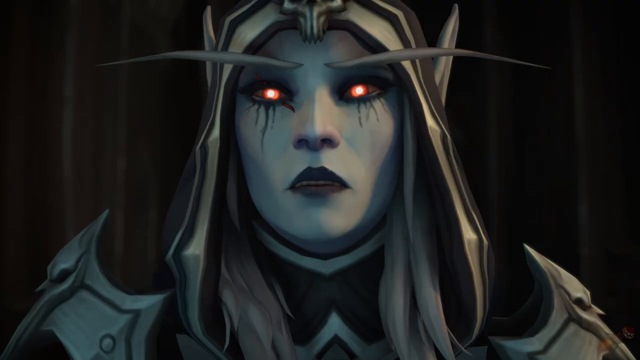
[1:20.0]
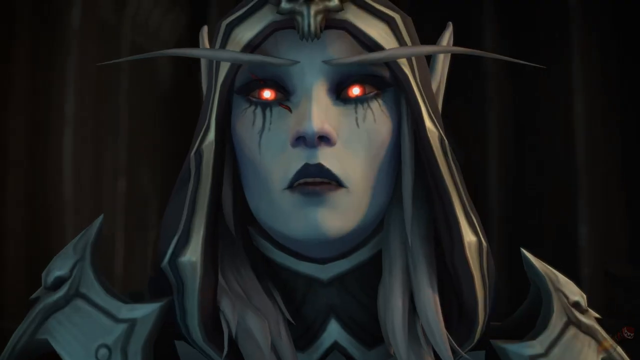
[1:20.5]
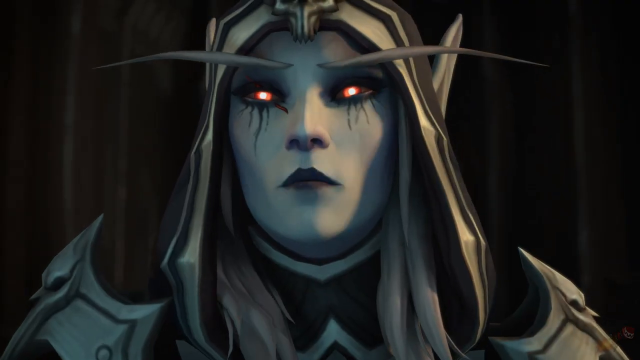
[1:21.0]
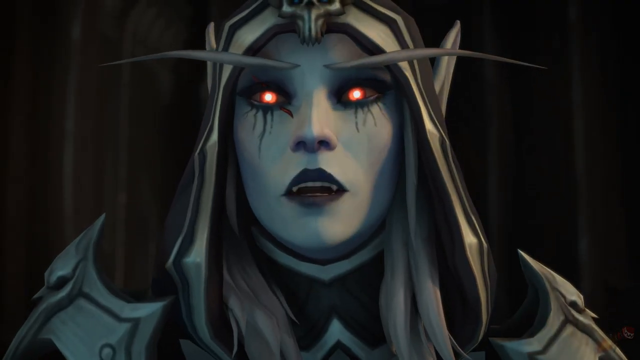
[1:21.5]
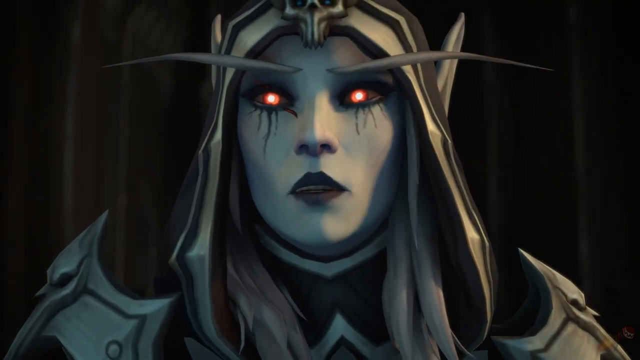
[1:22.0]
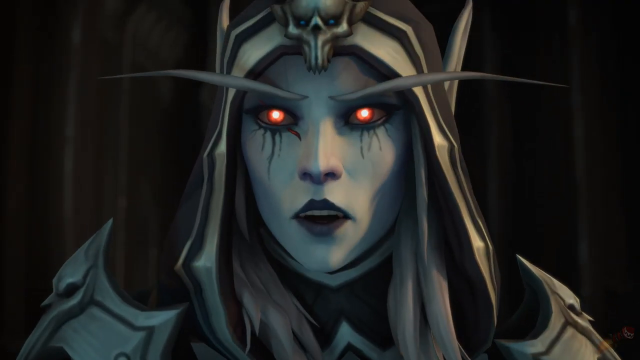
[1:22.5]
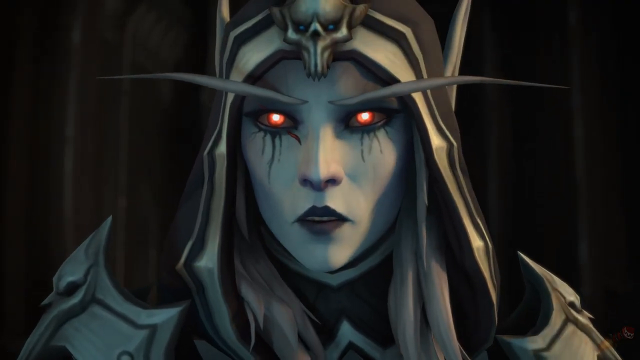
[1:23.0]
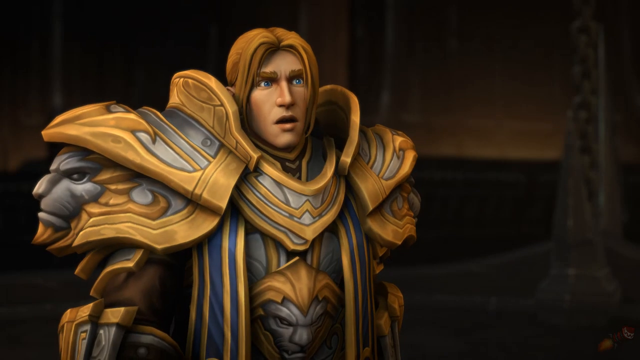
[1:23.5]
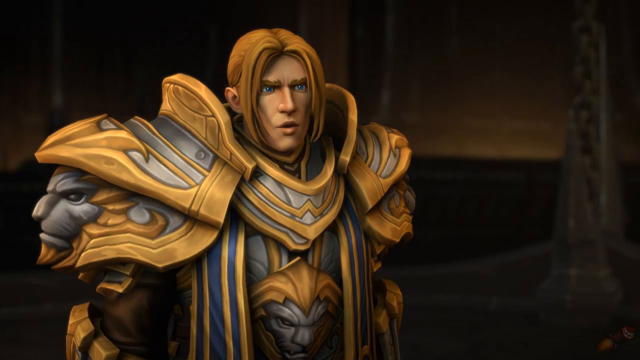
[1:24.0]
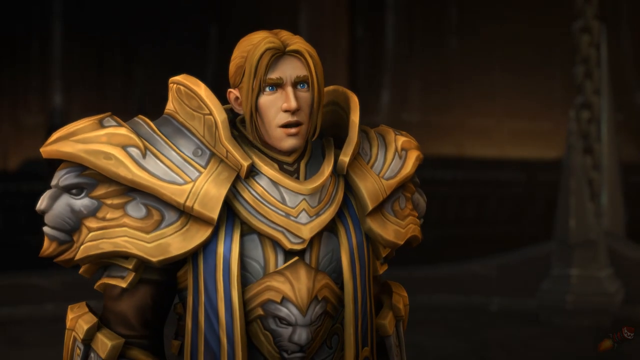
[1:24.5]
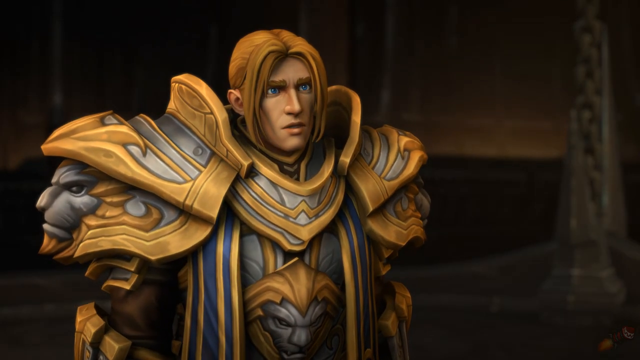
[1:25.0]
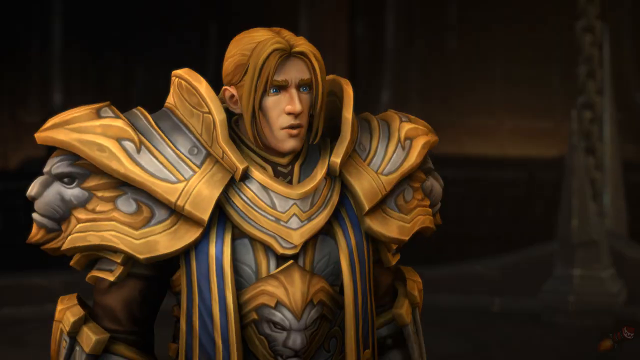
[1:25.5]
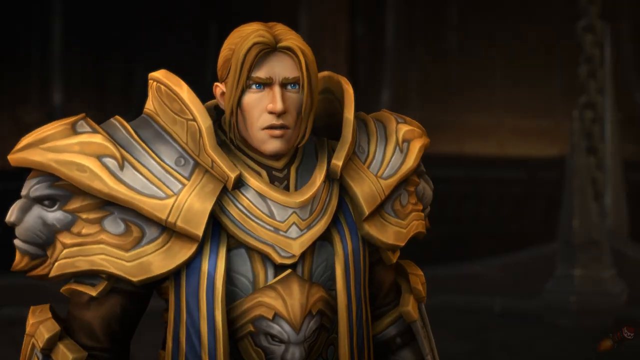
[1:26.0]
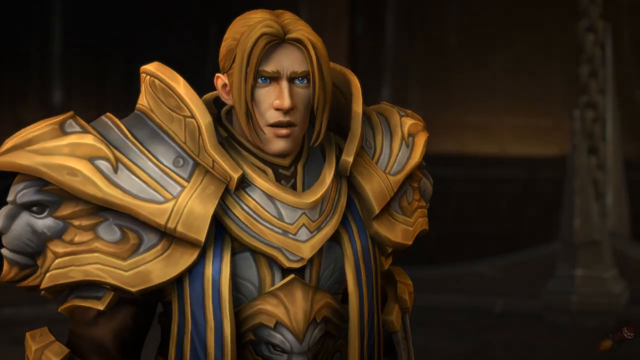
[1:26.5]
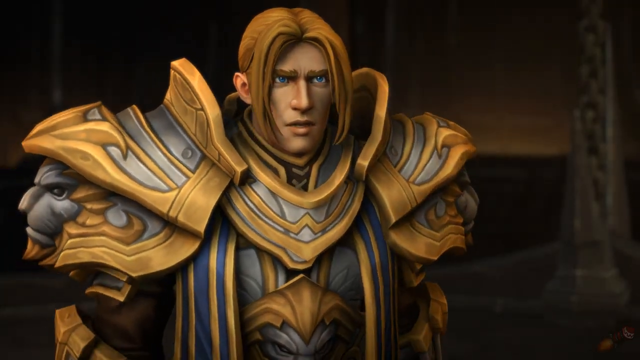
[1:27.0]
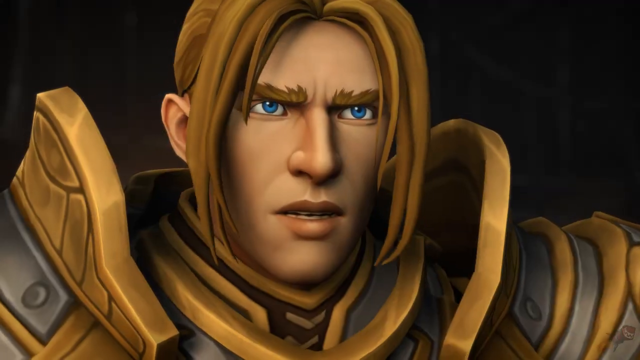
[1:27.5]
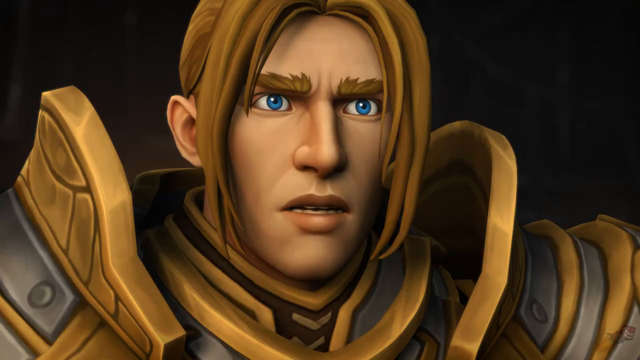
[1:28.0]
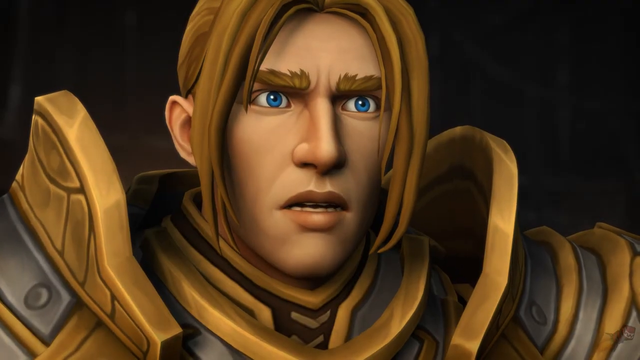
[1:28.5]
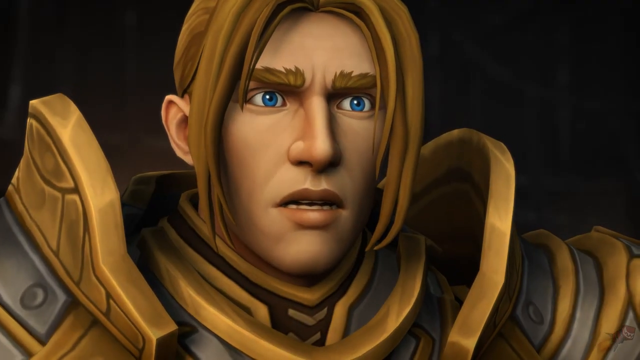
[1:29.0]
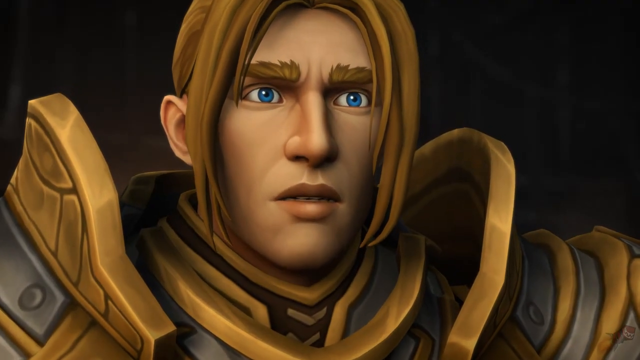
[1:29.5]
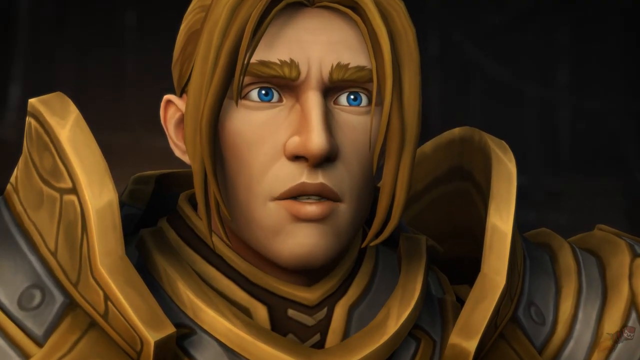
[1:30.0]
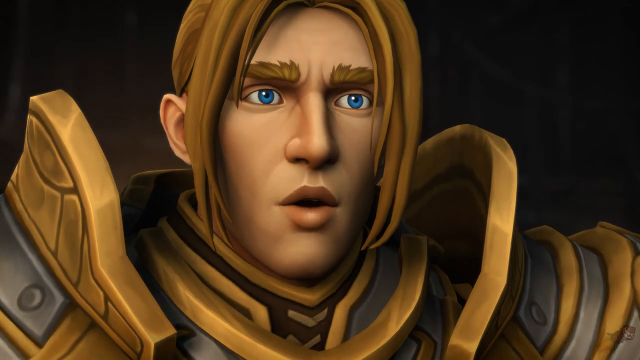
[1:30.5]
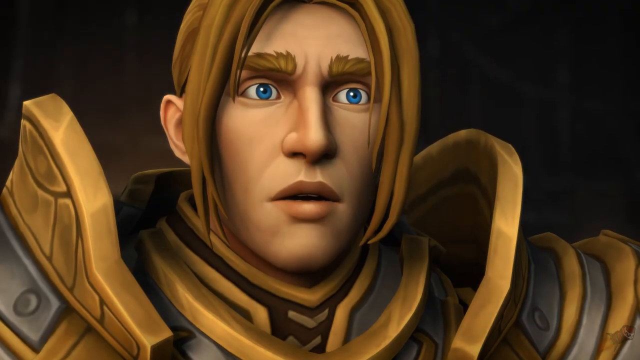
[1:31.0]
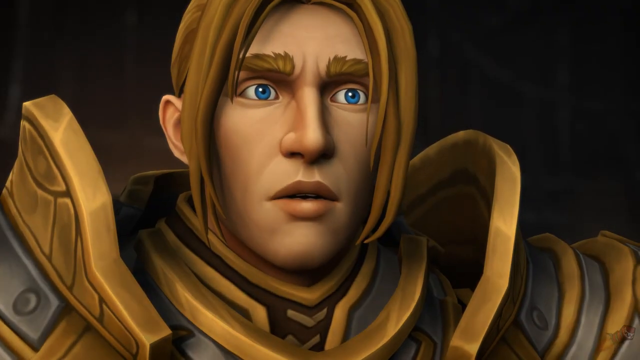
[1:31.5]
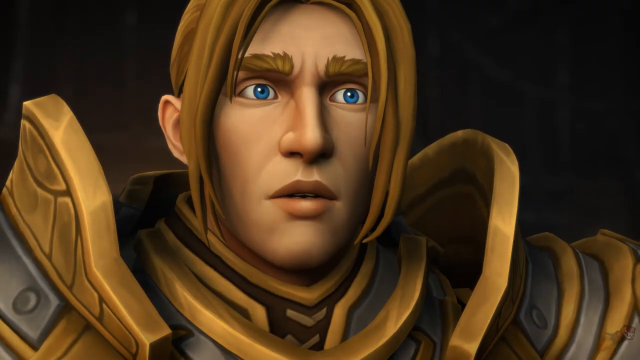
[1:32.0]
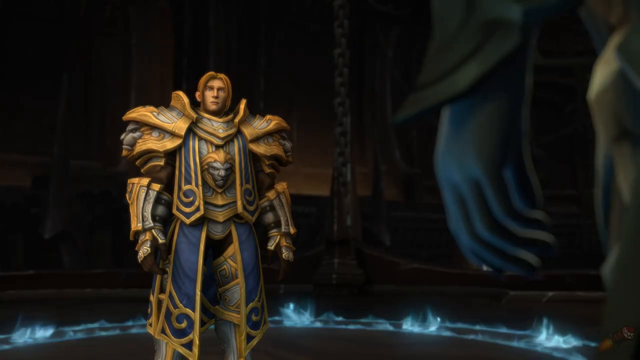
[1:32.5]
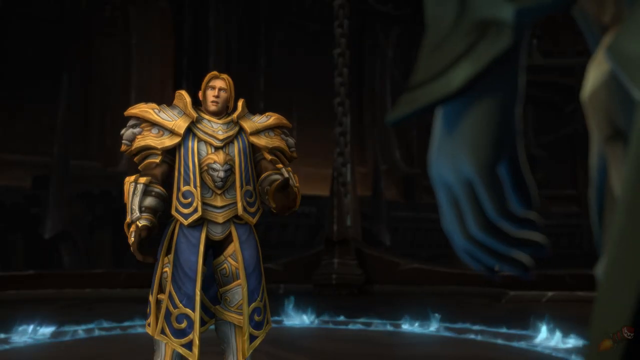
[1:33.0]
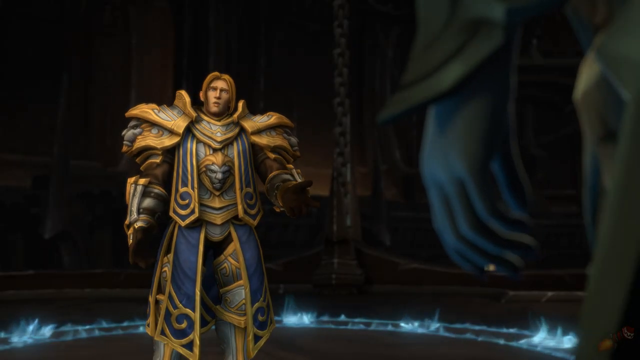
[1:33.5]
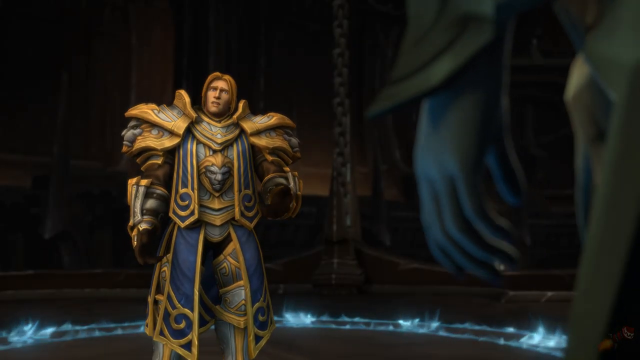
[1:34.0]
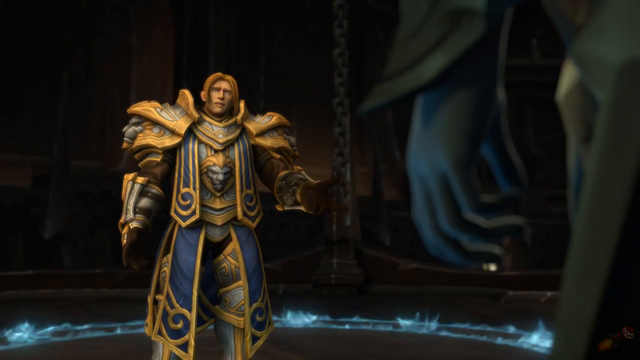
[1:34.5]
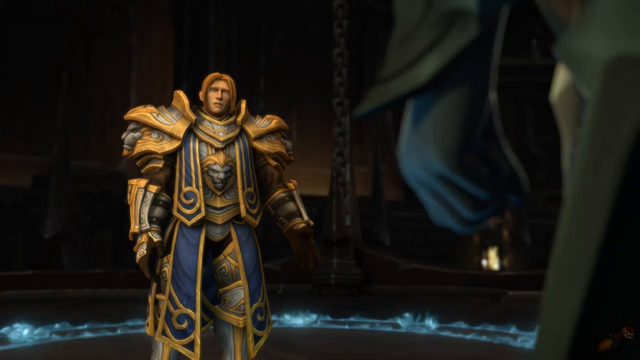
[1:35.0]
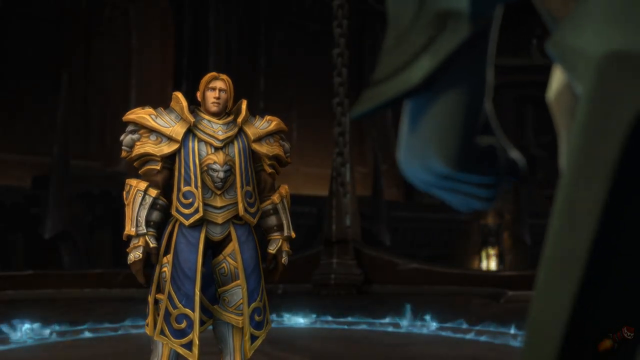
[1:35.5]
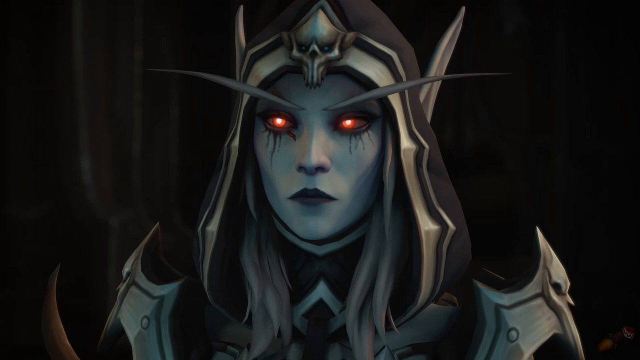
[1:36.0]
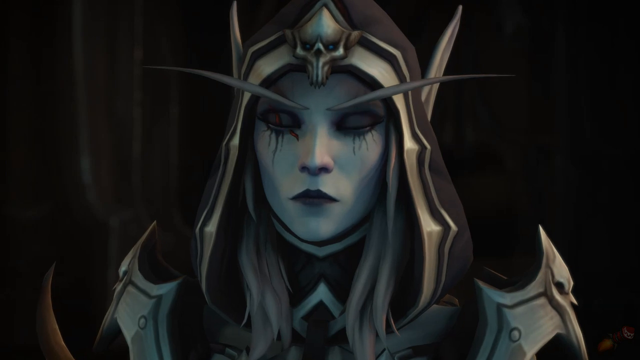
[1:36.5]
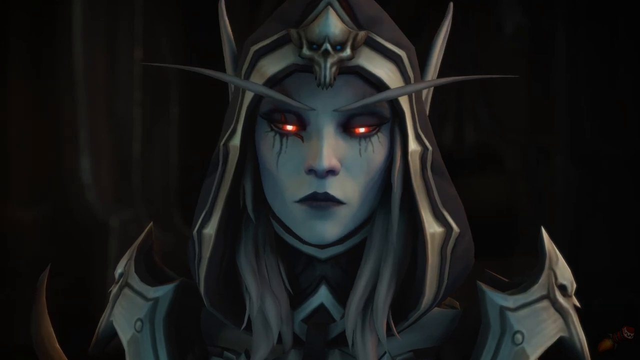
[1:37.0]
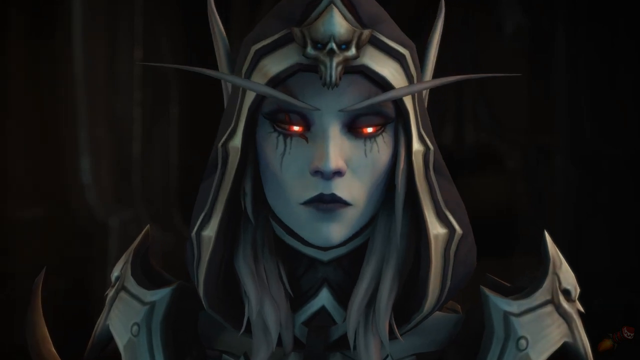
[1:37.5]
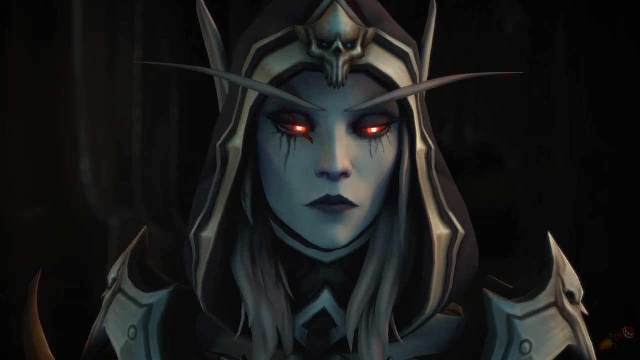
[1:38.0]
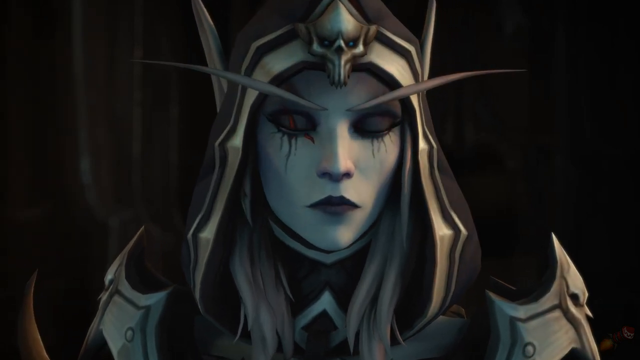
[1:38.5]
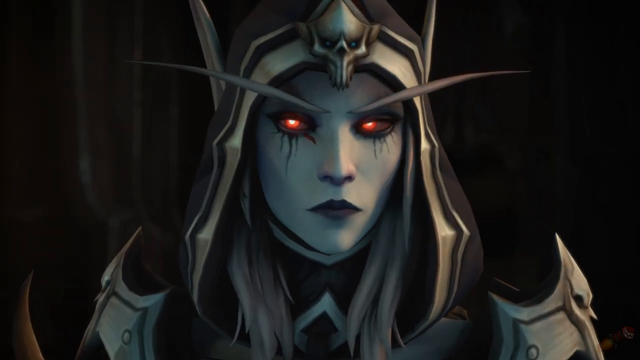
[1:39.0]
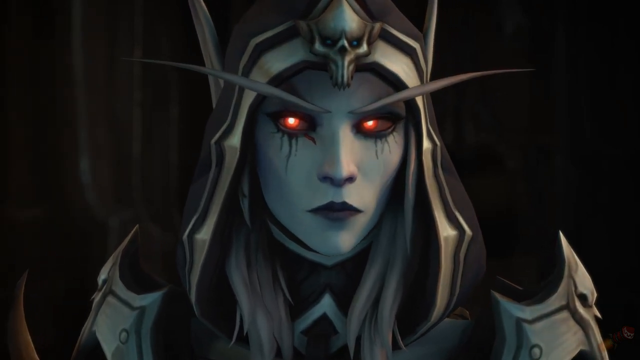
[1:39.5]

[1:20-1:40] One of the fighting characters has blonde hair and yellow, golden armor made of many layers, and he tries to use his abilities and armor to overpower his opponent.